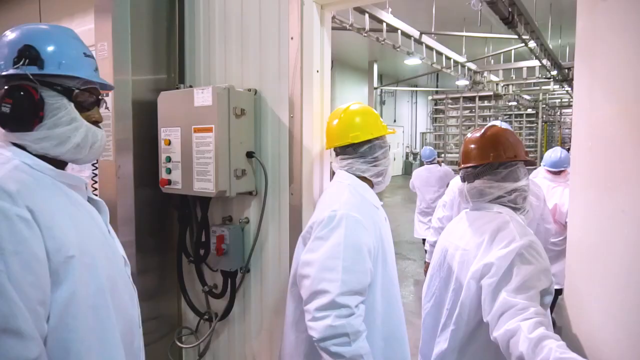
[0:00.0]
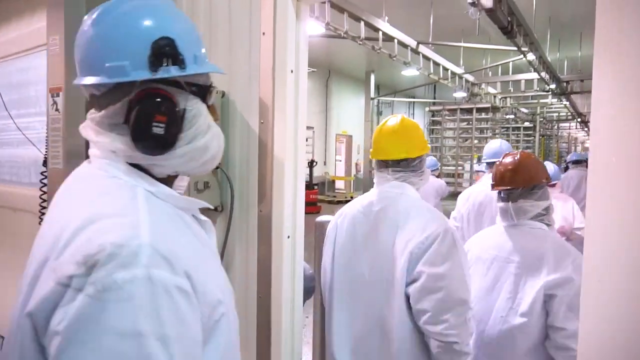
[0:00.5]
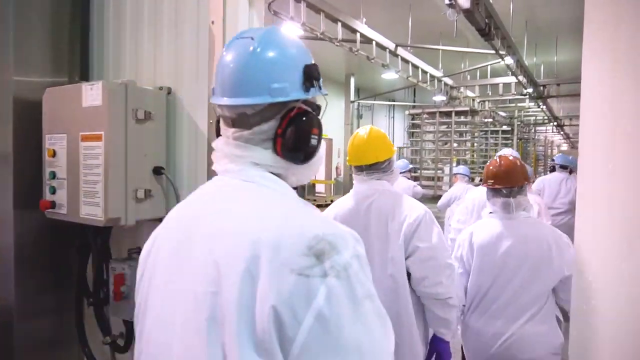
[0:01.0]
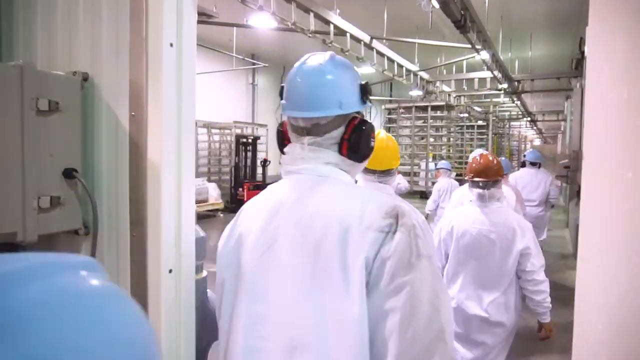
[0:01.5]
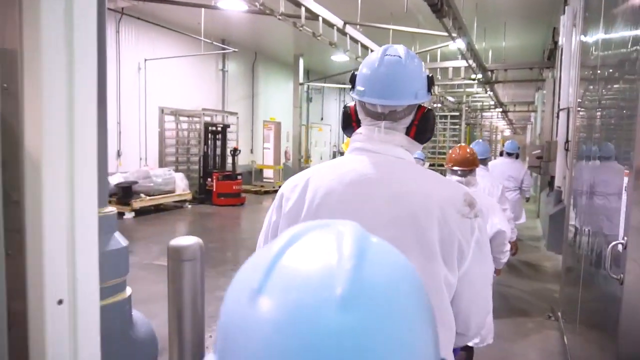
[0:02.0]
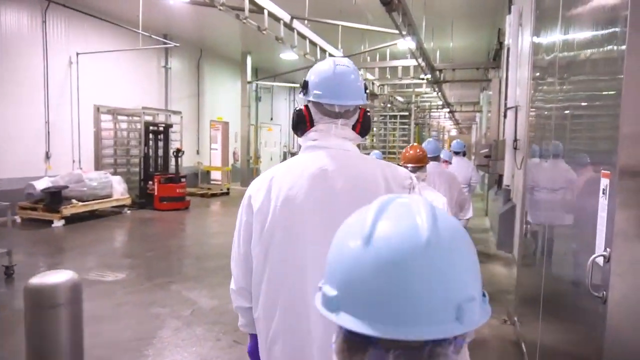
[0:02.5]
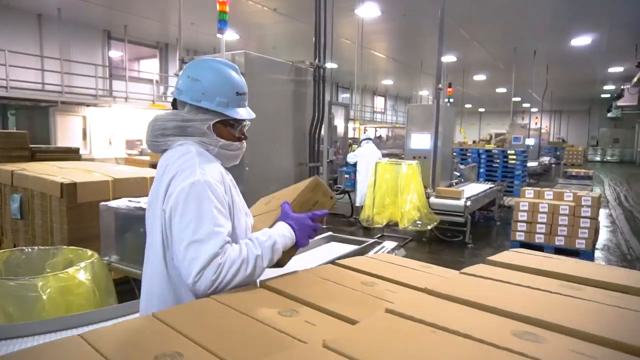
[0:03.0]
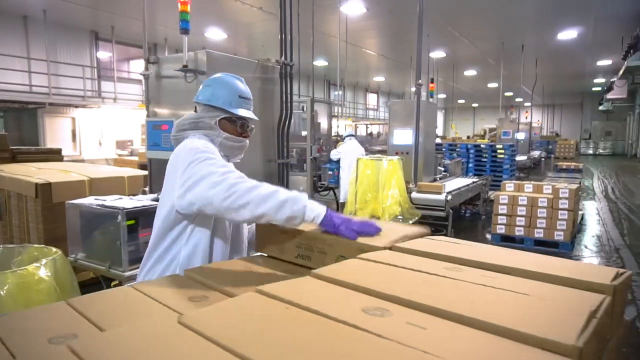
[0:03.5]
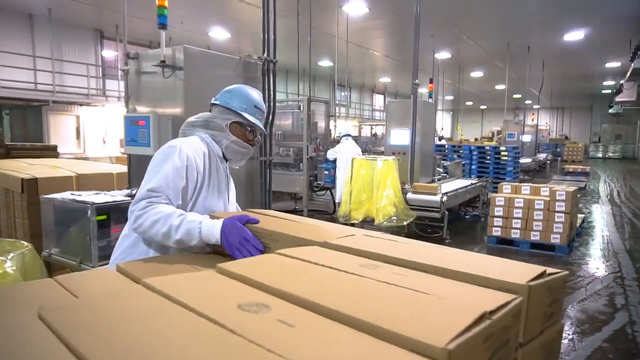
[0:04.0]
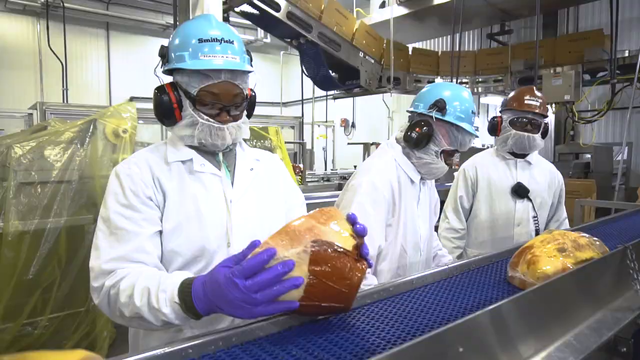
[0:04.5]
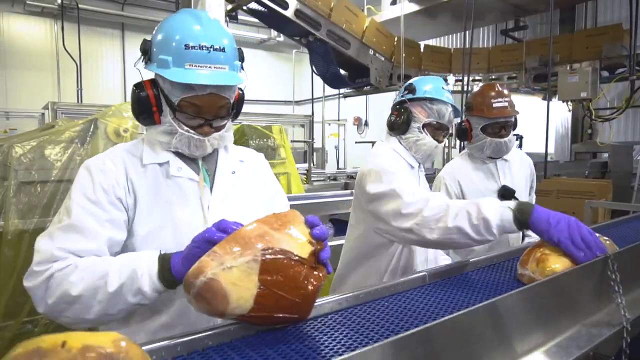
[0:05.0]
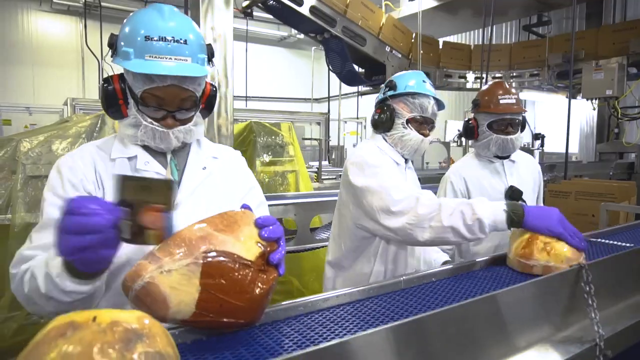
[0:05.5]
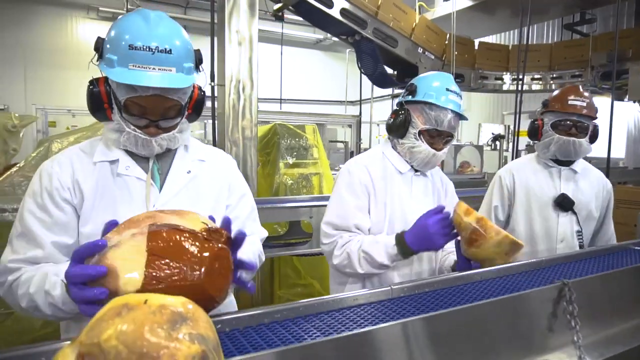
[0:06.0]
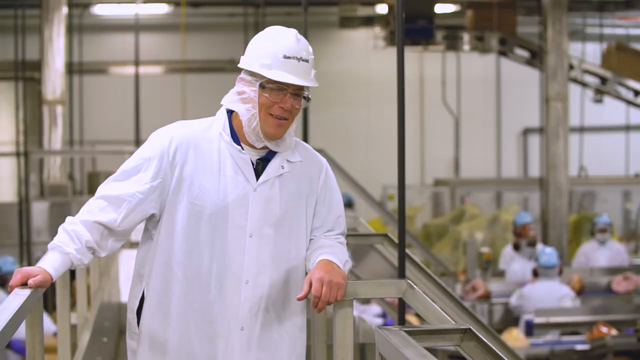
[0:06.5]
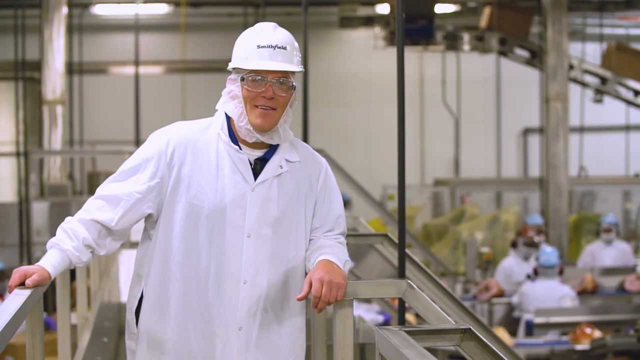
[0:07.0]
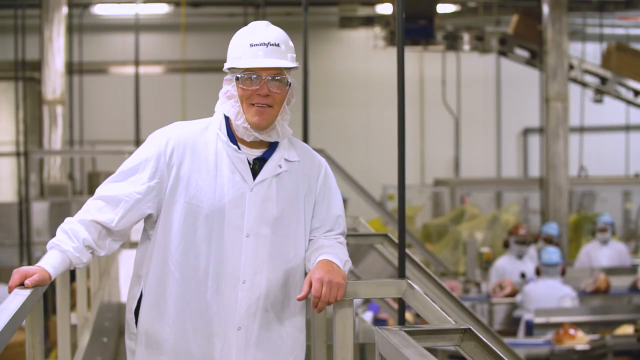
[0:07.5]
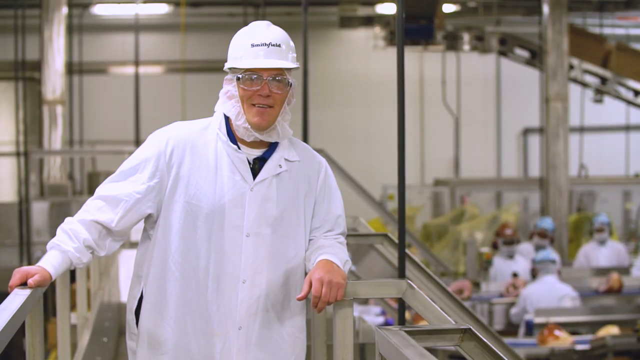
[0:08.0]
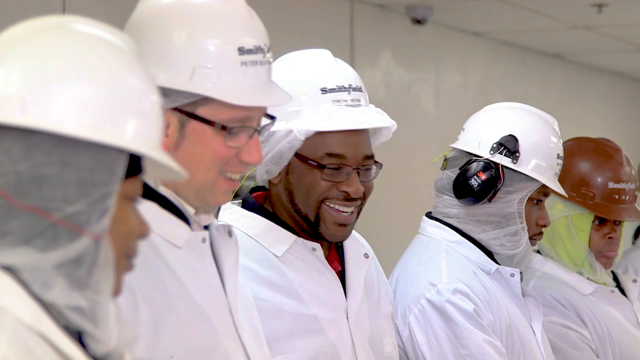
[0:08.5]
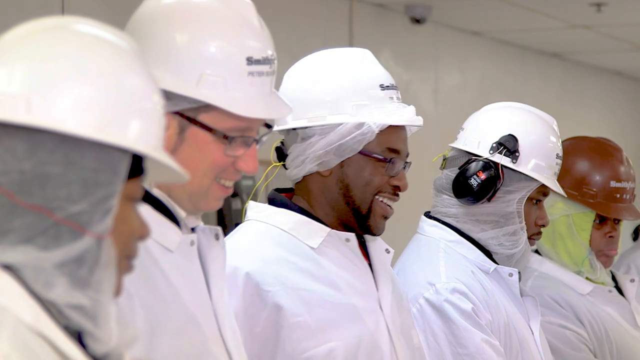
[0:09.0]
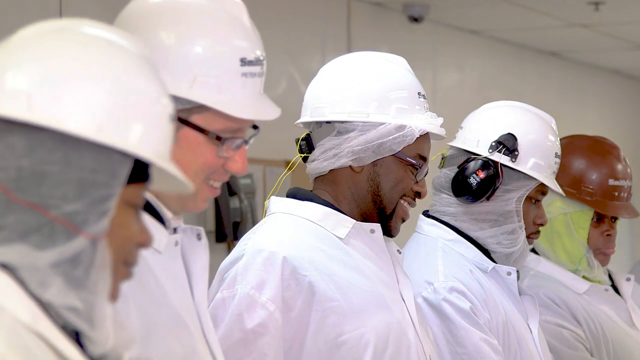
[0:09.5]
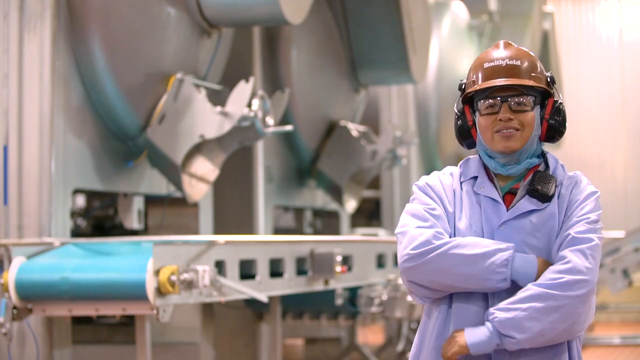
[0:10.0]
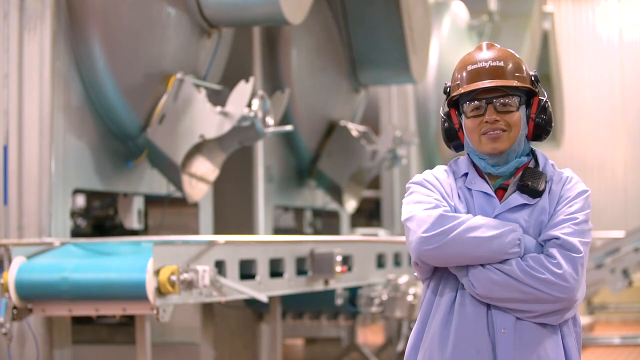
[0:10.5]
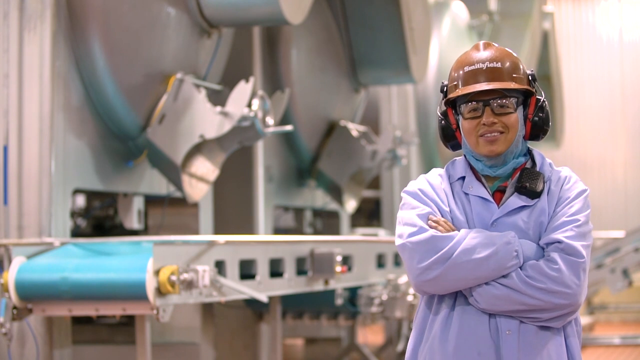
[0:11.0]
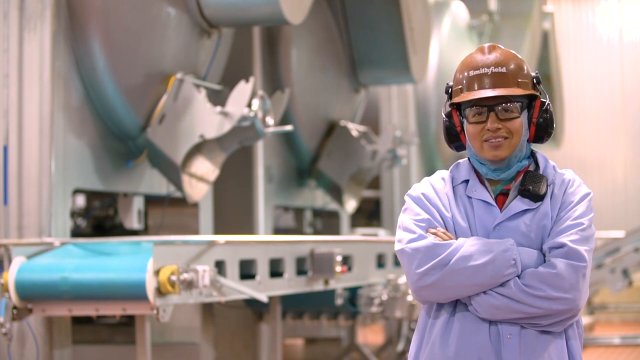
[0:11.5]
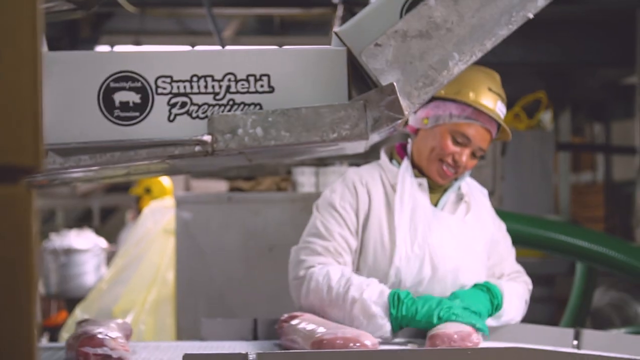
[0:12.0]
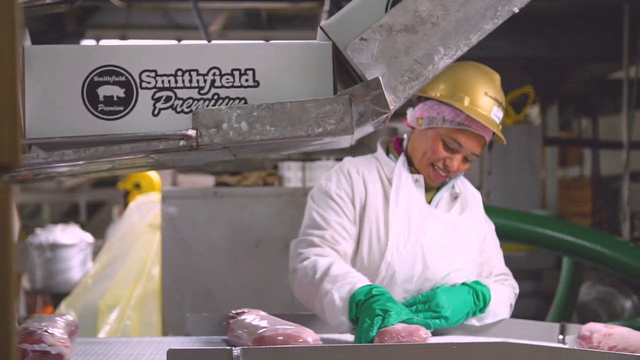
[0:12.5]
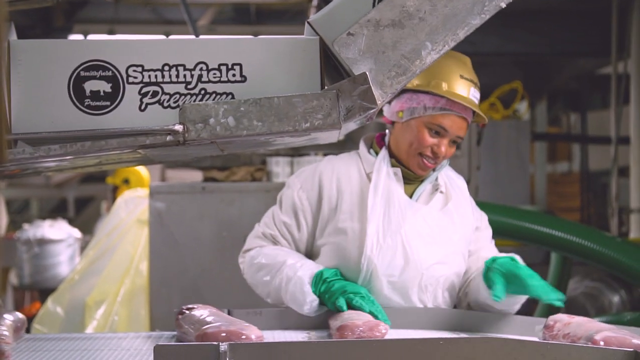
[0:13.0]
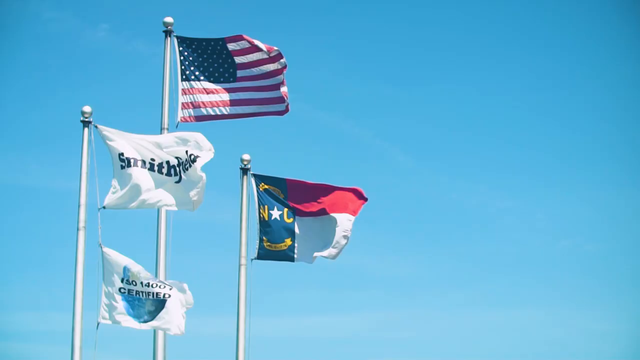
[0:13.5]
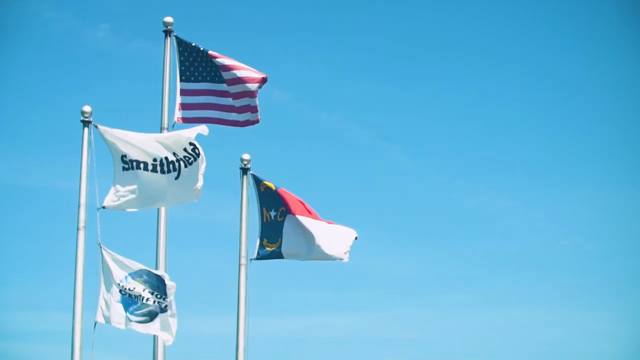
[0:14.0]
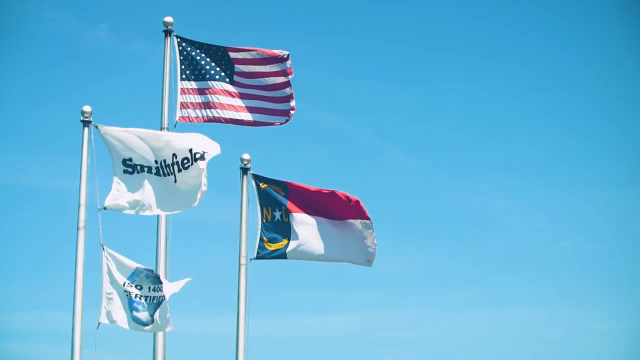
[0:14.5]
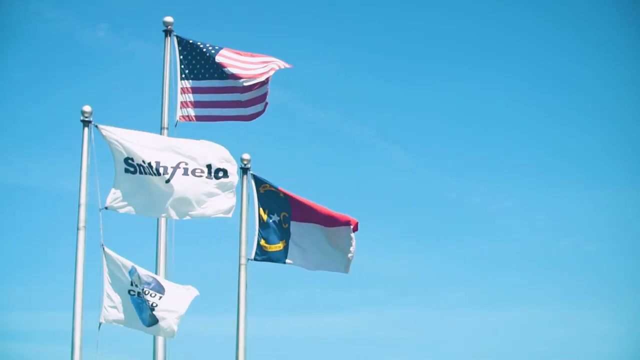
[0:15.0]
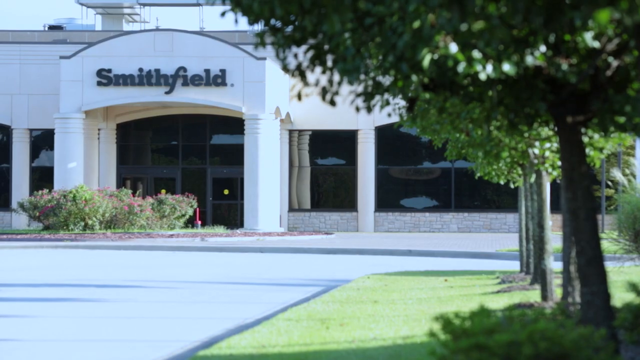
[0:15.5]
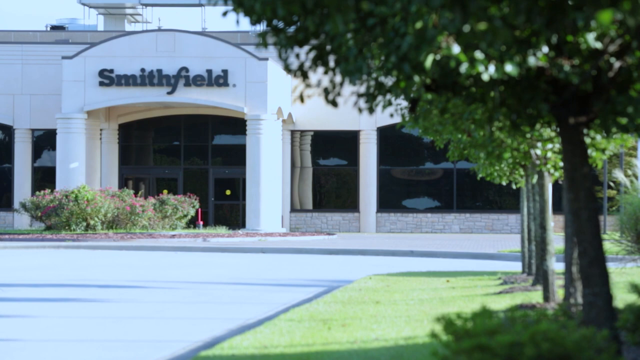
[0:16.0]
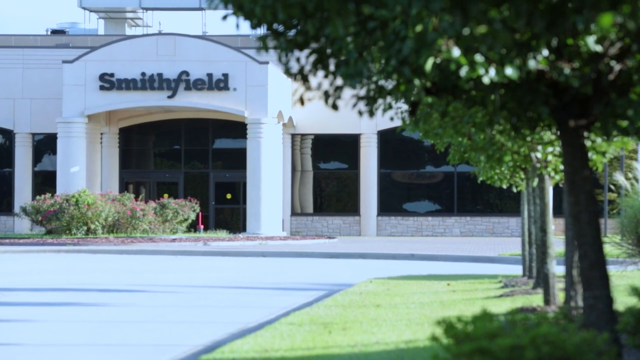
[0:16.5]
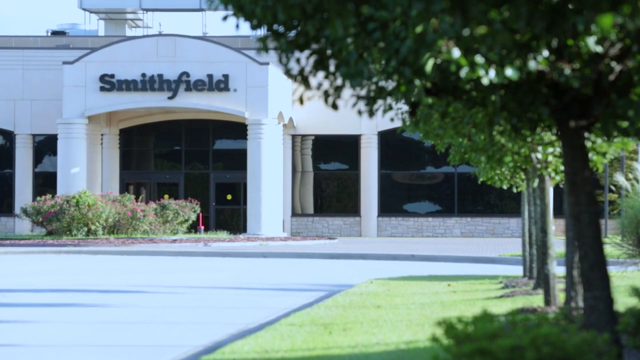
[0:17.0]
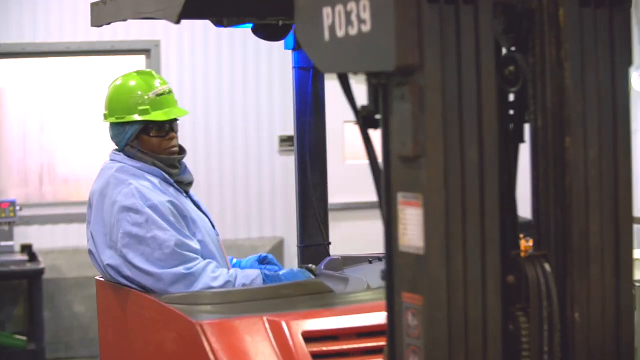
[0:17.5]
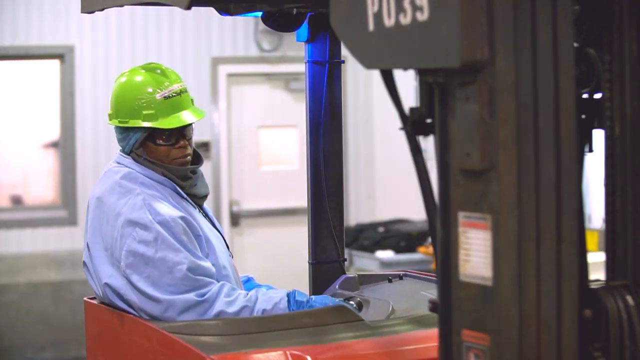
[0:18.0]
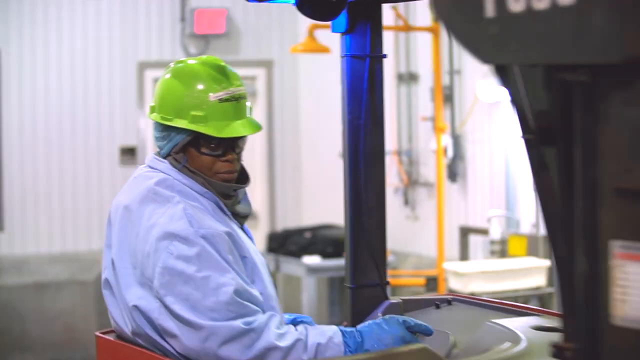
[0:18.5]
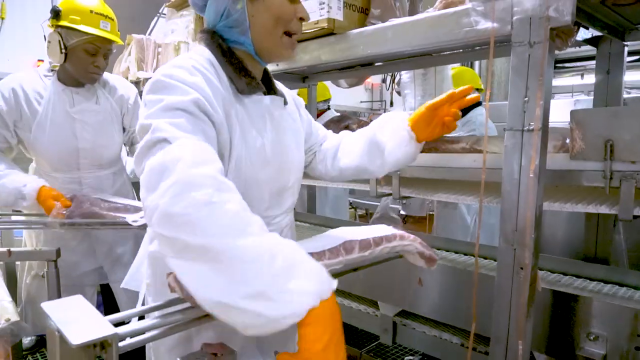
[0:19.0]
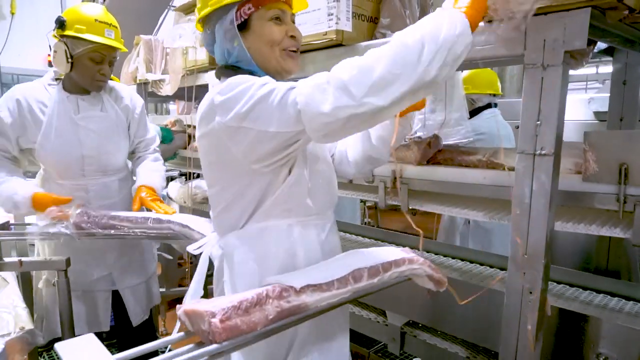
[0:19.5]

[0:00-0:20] A large group of people walks into a warehouse room, all wearing hard hats. Those at the front wear pale blue hard hats; a person walking through the door wears a red one, the person behind wears a yellow one, and the person behind that wears a blue one. The next shot shows a person in a blue hard hat, a hairnet, a white cloak and purple gloves putting boxes onto a large pile of other boxes. Three people at a conveyor belt pick products off and check them. Various other shots of the people in the warehouse follow, some of them smiling; one poses in front of the camera, and another checks more things on the conveyor belt. Outside, under a blue sky, there are four flags, the top one an American flag and the one underneath a Smithfield flag. The outside of the building has "Smithfield" written above the main door. Back in the warehouse, another individual is on a truck of some kind.